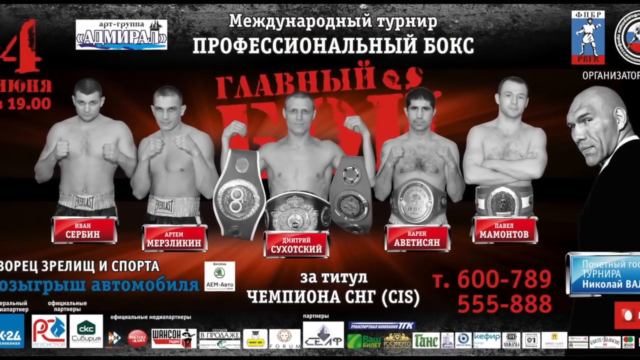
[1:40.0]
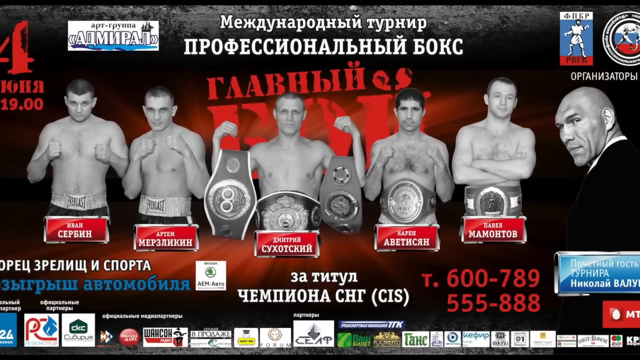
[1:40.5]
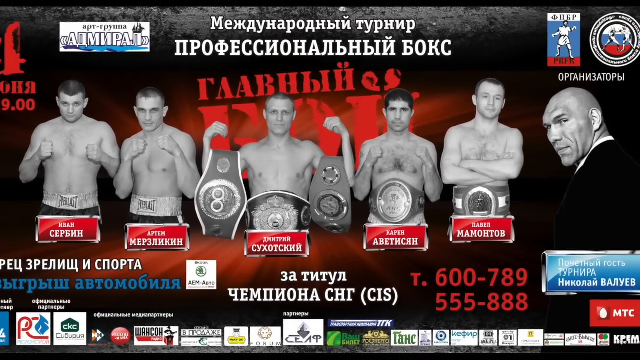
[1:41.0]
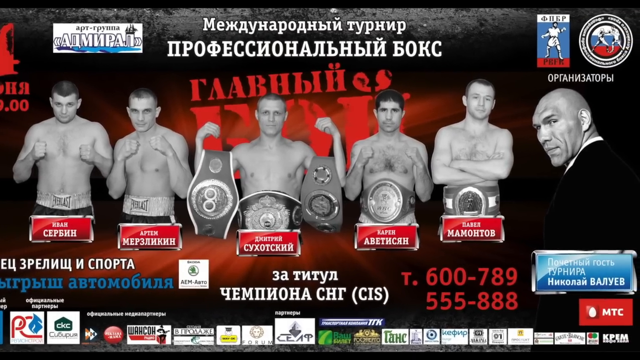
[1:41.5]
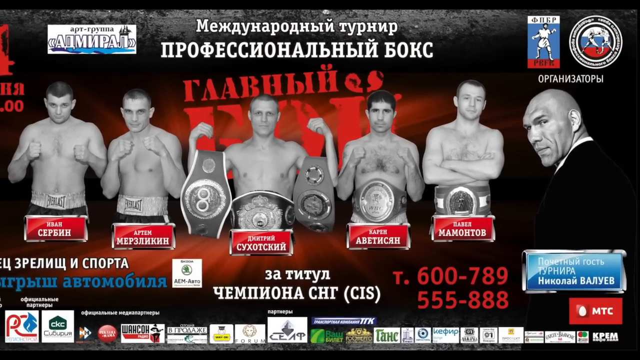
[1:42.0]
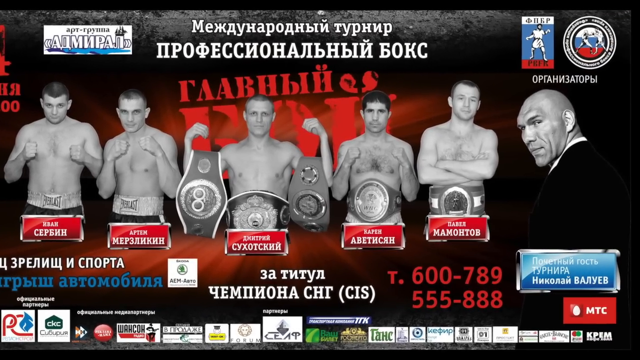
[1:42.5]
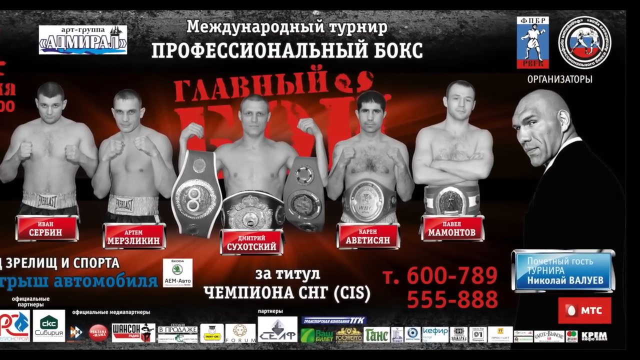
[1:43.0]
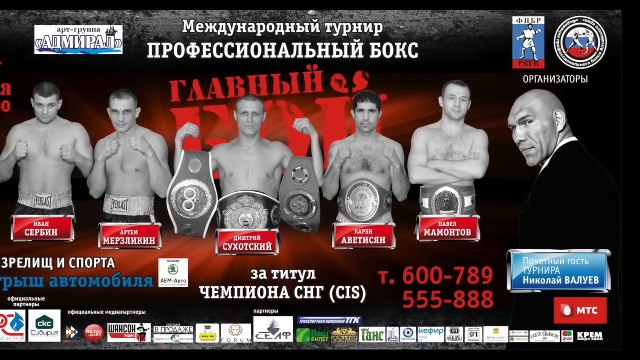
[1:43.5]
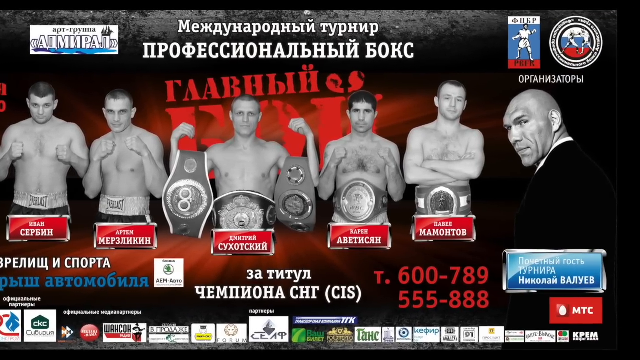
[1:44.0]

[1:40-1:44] Five men are in the middle with one more man on the right, six men in total. The five in the middle are boxers with their hands up or forward. The middle boxer holds two boxing belts, one on each arm, as he sort of flexes, and also wears a belt in front of him. The person to his right wears a belt and has his arms up in a boxing stance. The last person has his belt on and his arms crossed. The man on the far right is bald, has his arms crossed, and wears a black shirt and suit. The scene sort of zooms in to the right, focusing more on the man on the right. A red number on the bottom right reads "T-600-789-555-888".